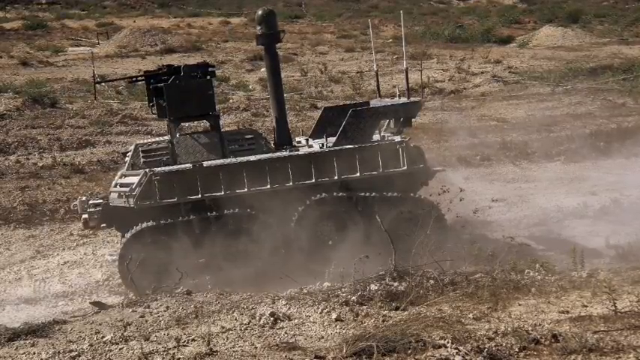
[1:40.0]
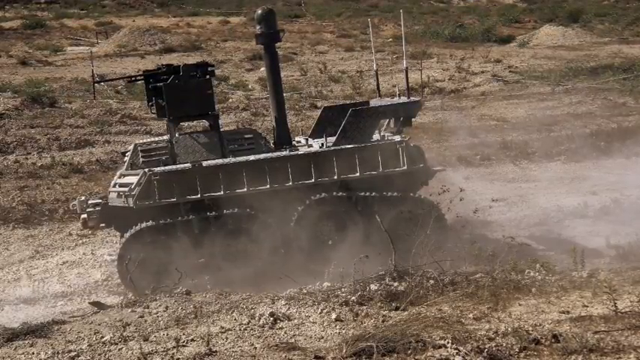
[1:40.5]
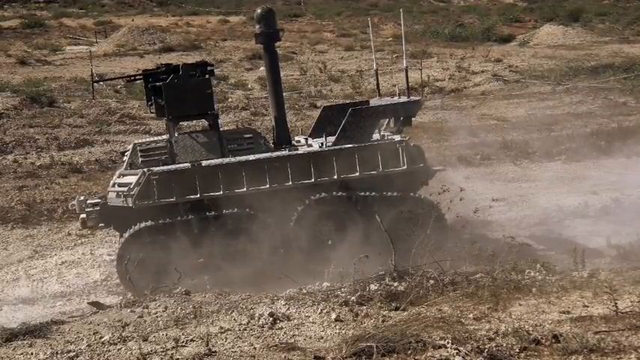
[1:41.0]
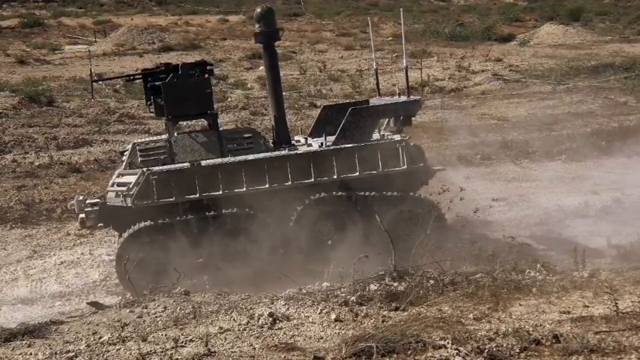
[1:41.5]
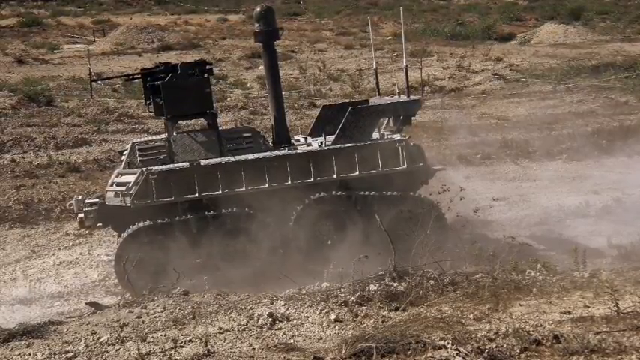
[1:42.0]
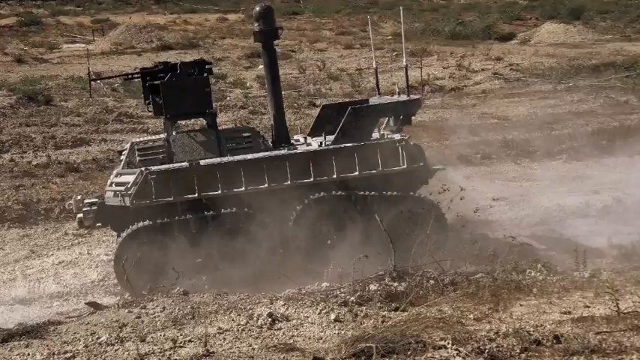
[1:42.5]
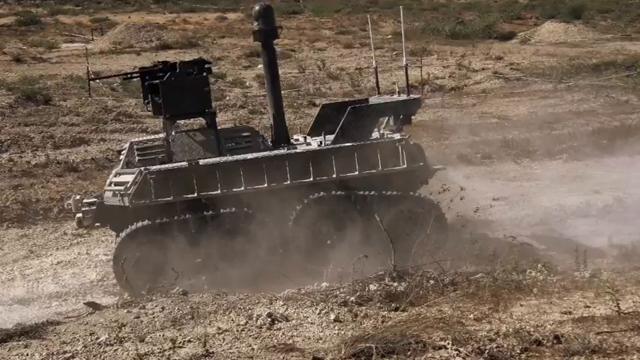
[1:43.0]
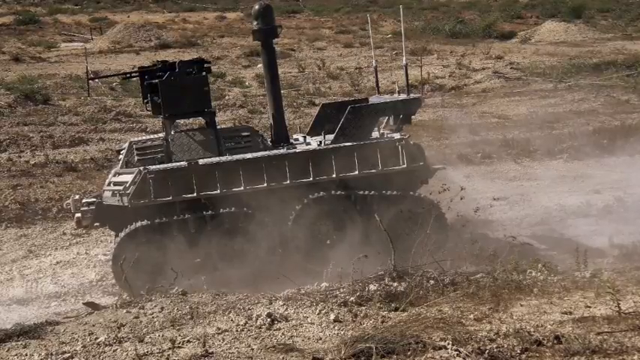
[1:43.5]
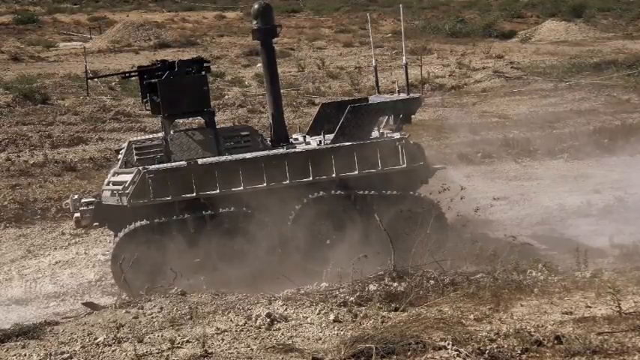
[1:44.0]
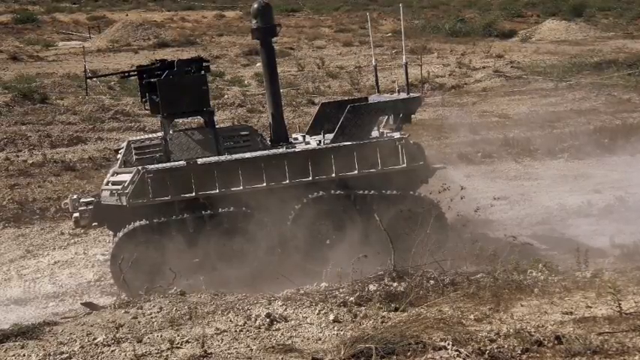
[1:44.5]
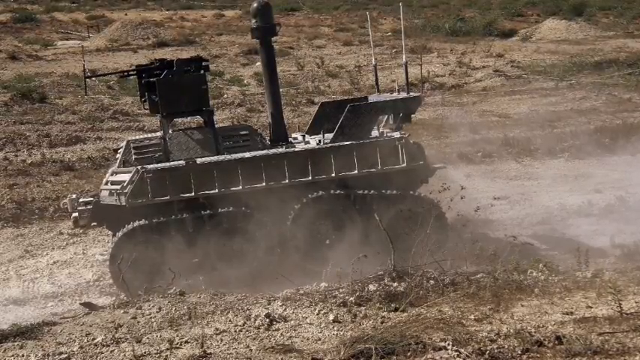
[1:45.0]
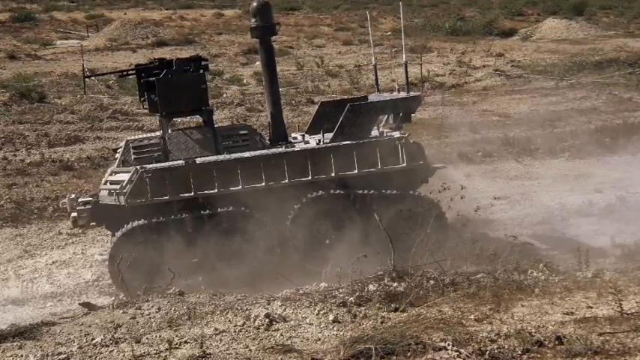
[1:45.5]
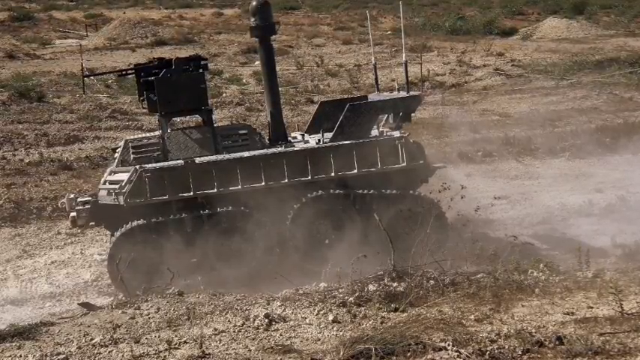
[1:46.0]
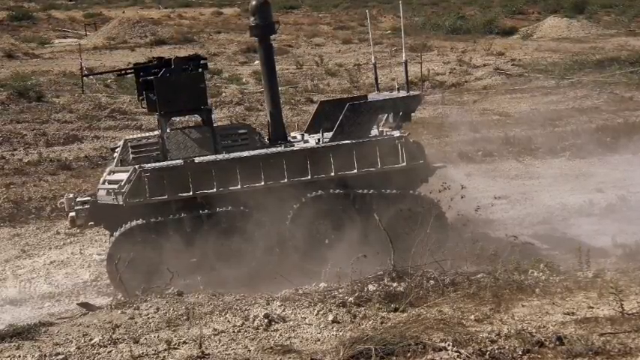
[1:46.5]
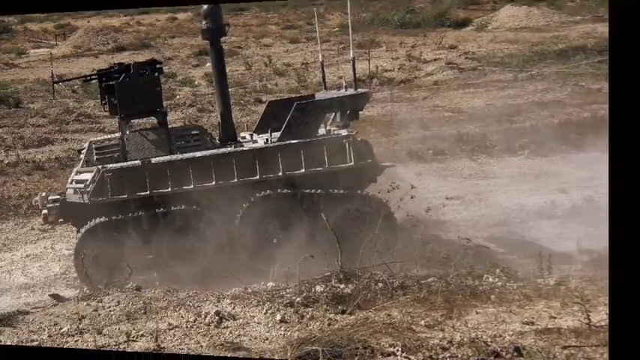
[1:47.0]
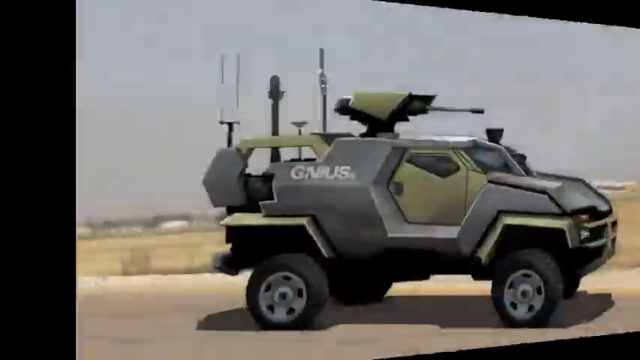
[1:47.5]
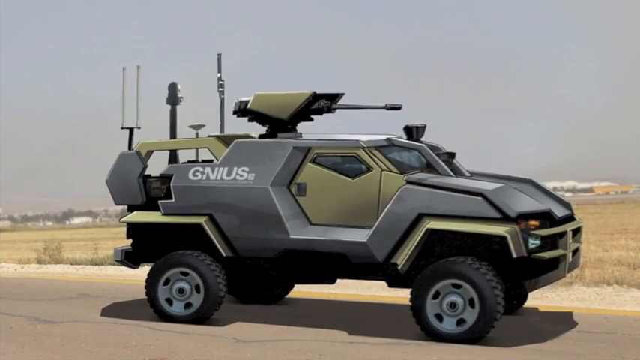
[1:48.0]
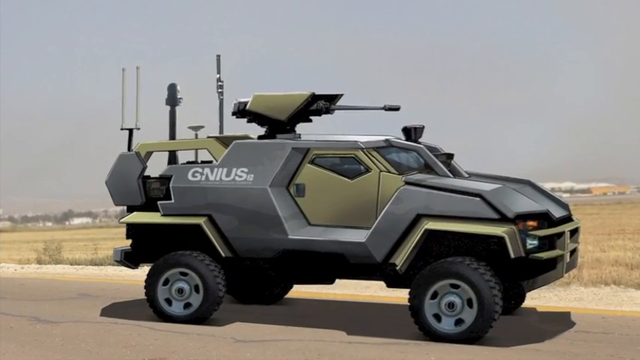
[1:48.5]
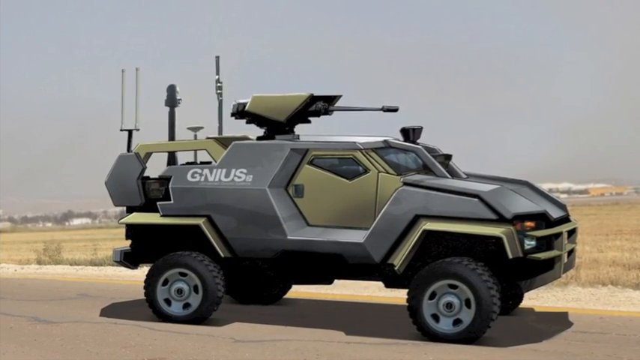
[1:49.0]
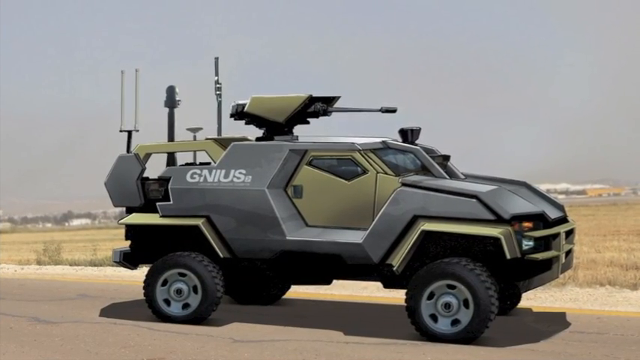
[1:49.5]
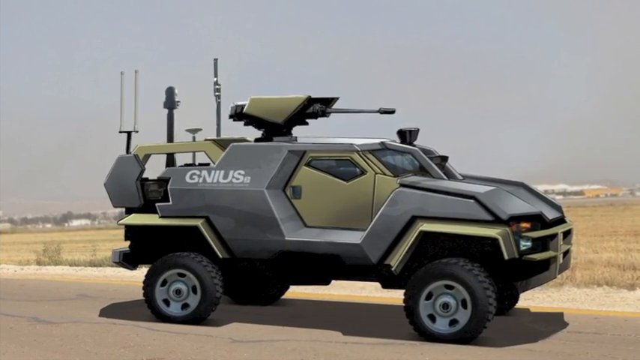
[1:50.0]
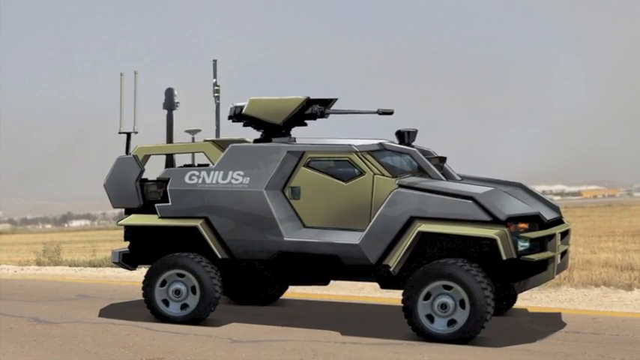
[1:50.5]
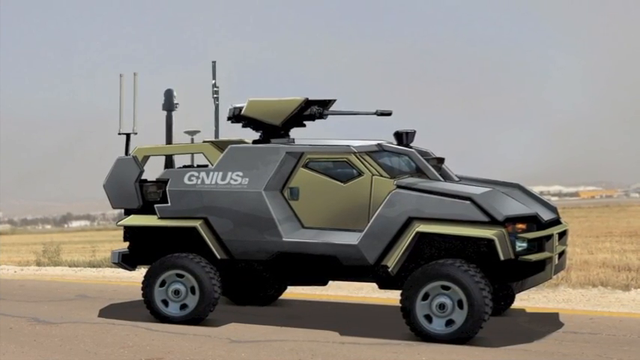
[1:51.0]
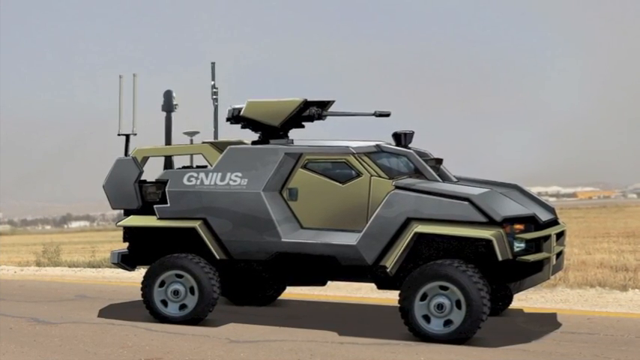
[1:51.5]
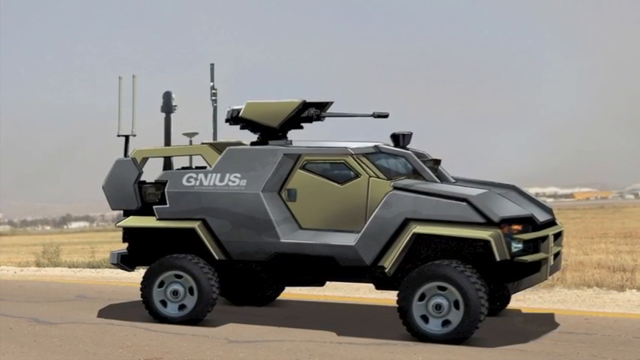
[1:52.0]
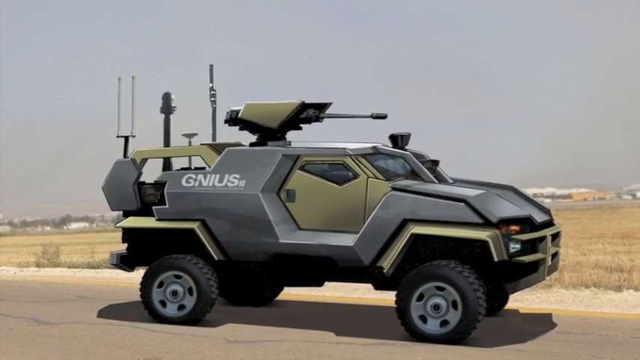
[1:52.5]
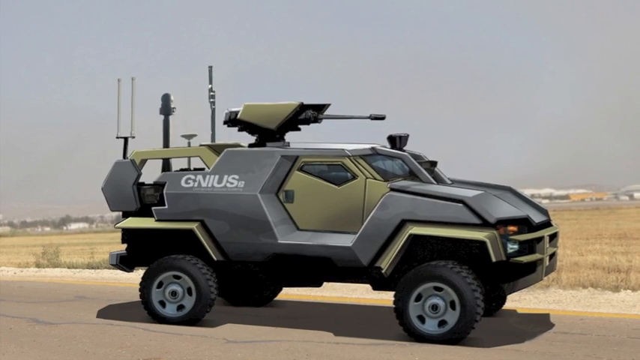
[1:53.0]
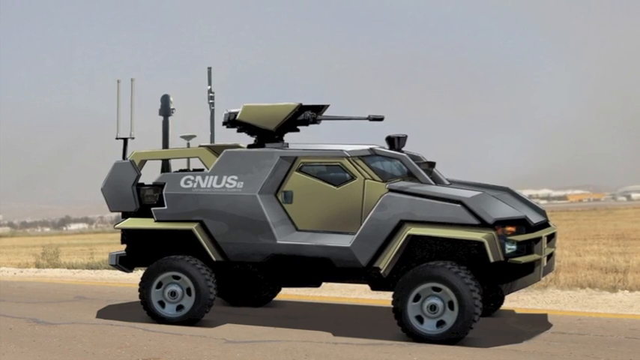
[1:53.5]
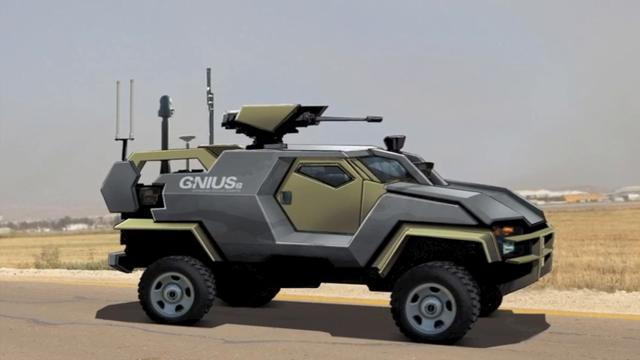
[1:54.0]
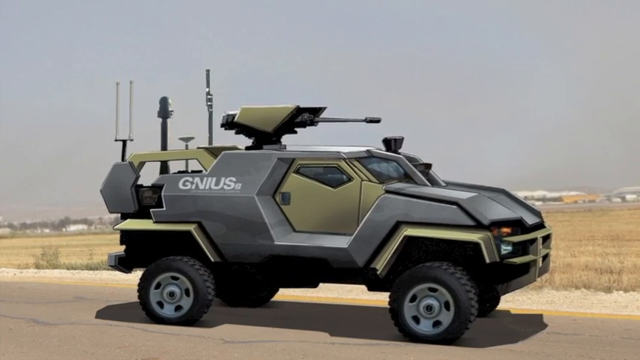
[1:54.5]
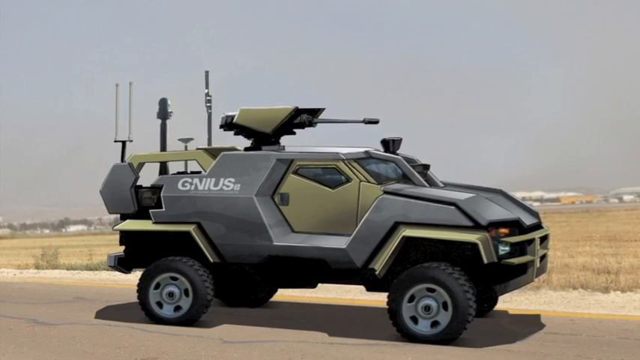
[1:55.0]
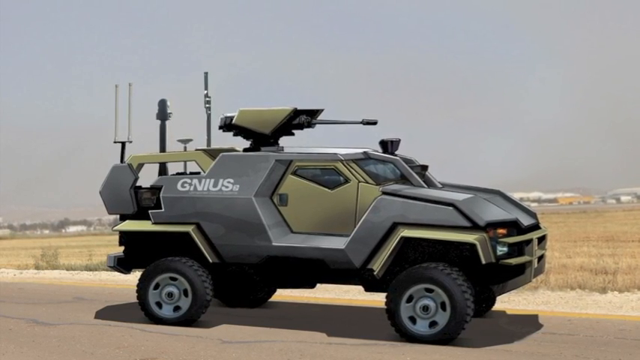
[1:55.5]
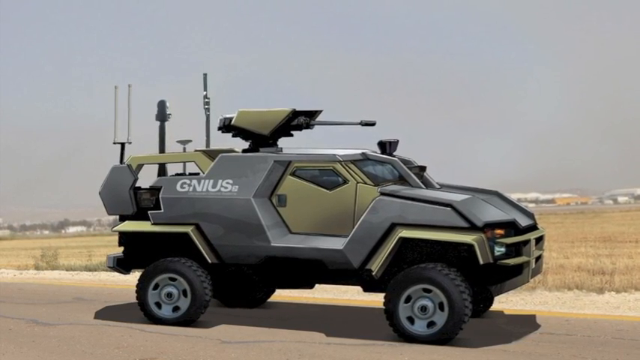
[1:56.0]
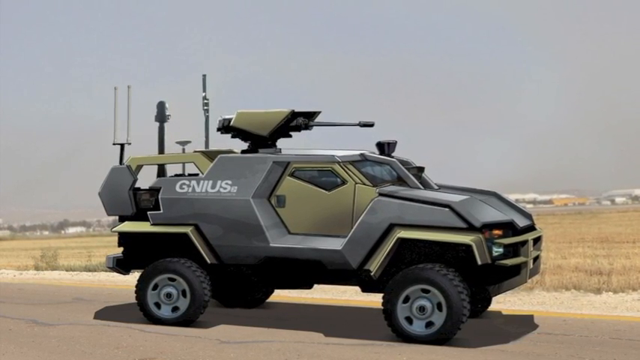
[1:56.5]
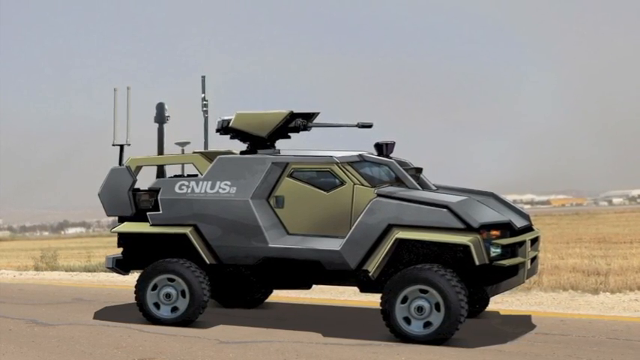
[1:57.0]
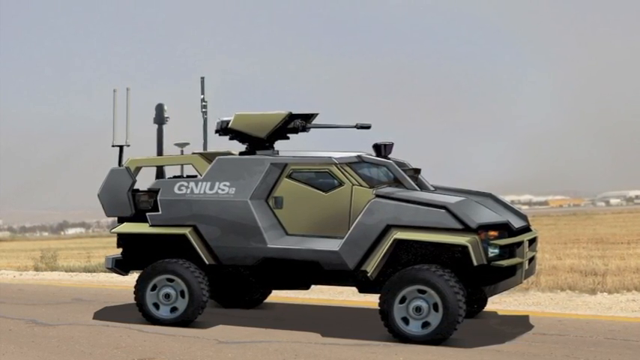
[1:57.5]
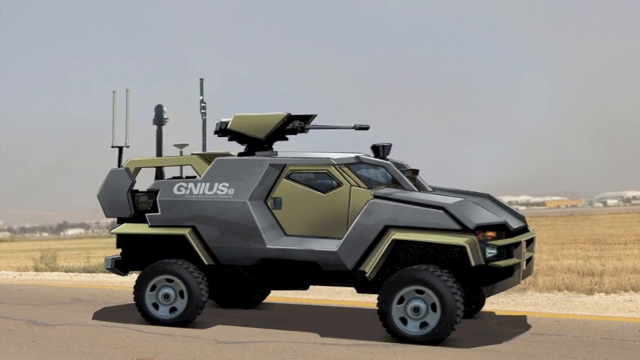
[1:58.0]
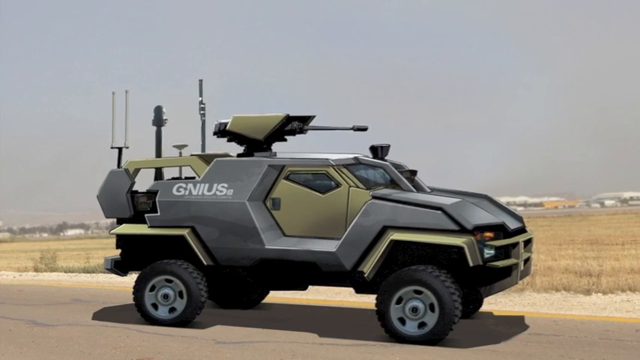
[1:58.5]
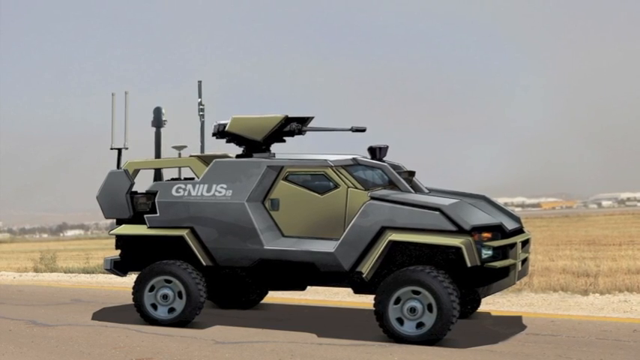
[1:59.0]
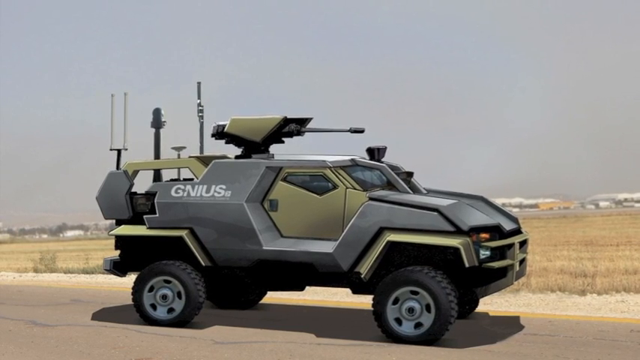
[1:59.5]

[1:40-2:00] The scenery seems to have a lot of greenery and dust, showing a rural area with not many buildings. There is a blackish car with dim lights on it and a lot of rough edges. It doesn't look like it has ordinary wheels; instead it has special equipment on the wheels to keep on track. The car also seems to have a radio on top. The next scene shows another military car, which also seems to have a weapon armed on top of it, seemingly a gun designed to be mounted on the car, and there are signal devices behind this car. Words are written on the car. At the front of the car the wheels are bigger, while at the back the wheels are smaller.